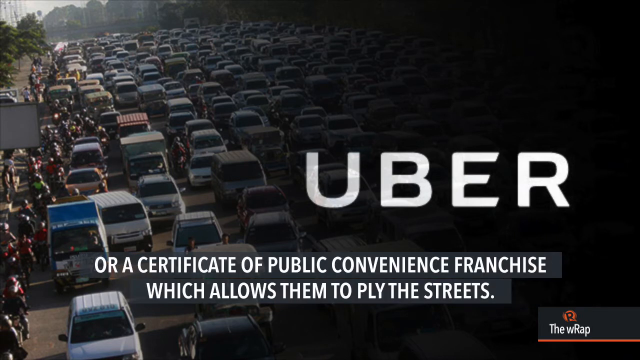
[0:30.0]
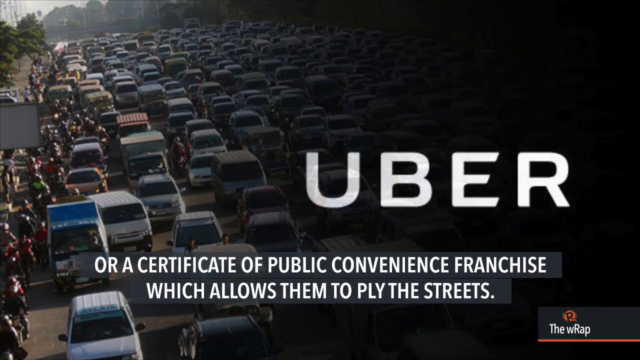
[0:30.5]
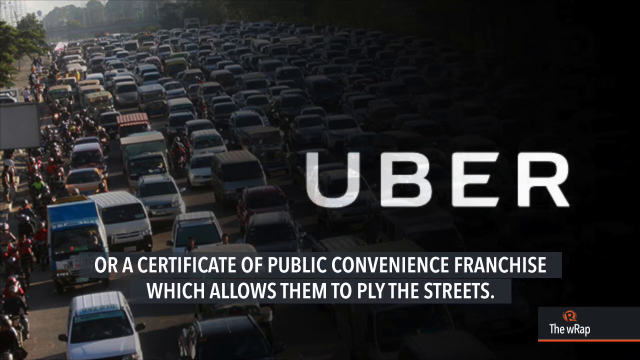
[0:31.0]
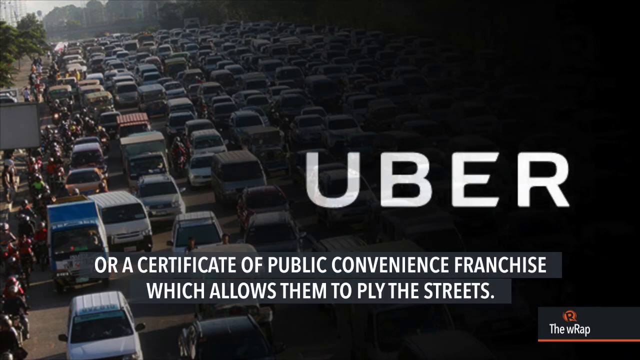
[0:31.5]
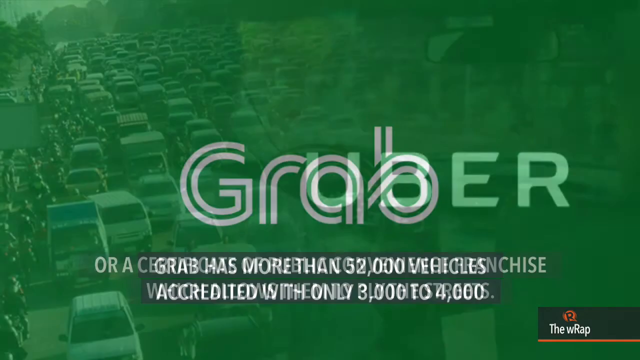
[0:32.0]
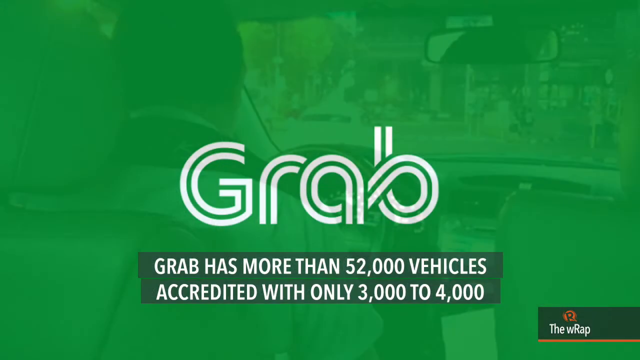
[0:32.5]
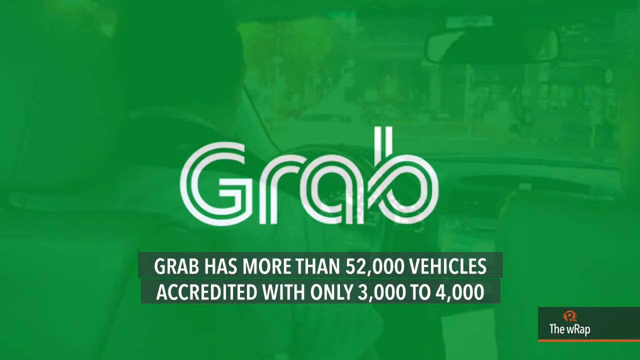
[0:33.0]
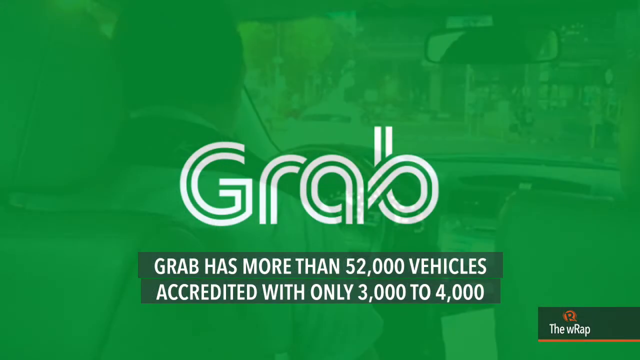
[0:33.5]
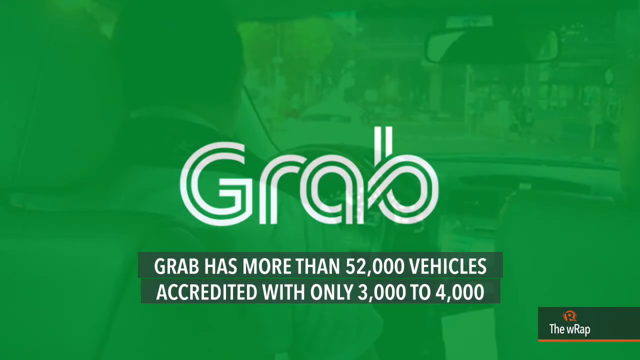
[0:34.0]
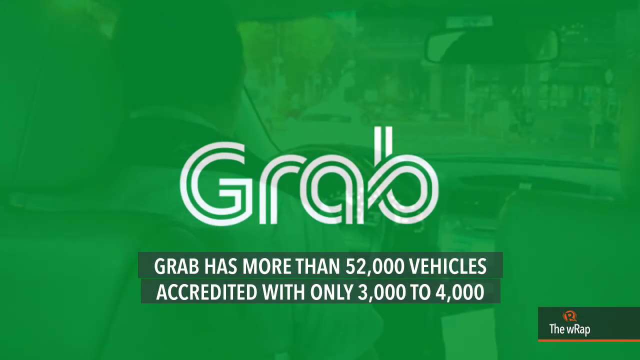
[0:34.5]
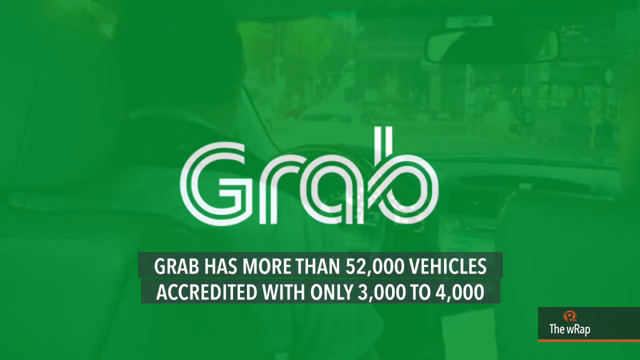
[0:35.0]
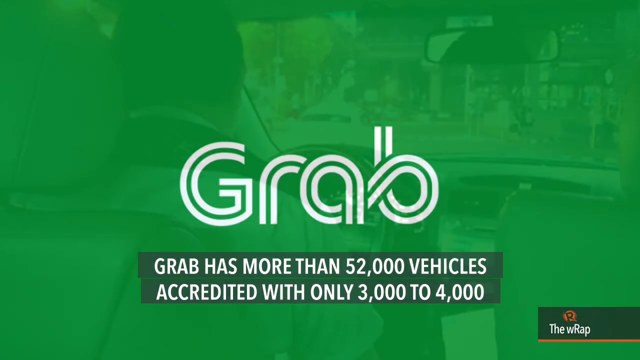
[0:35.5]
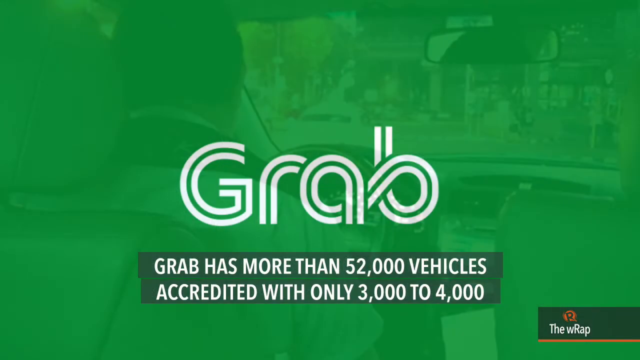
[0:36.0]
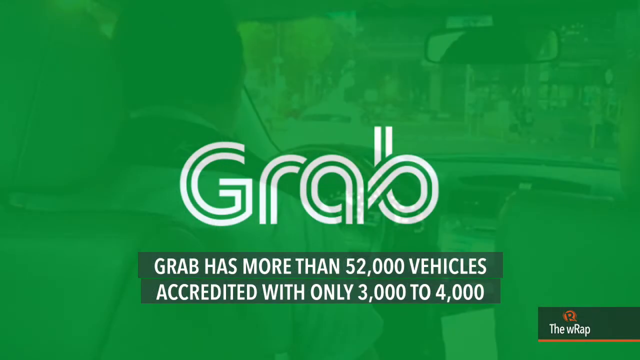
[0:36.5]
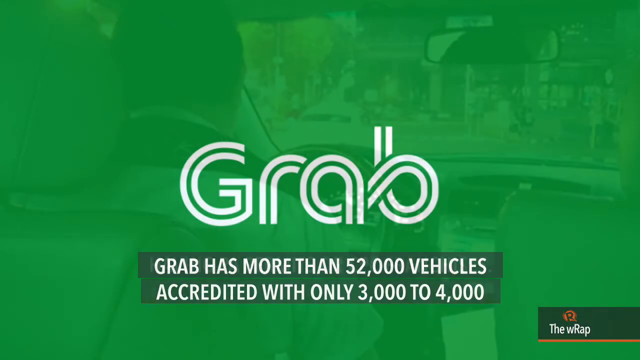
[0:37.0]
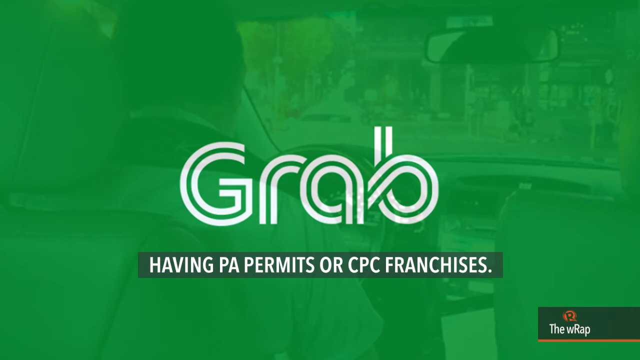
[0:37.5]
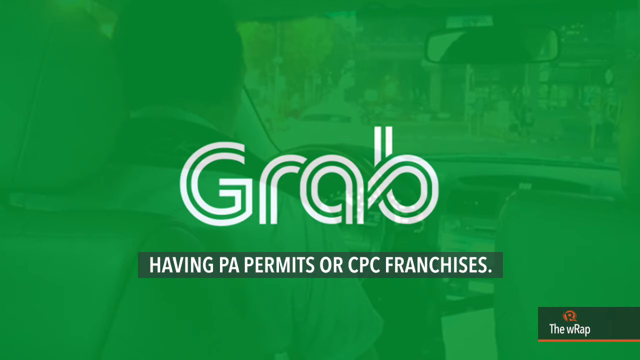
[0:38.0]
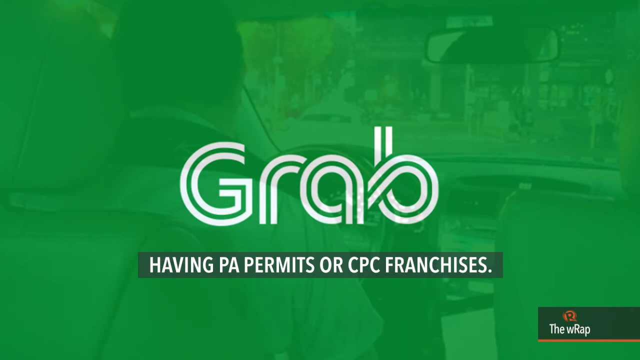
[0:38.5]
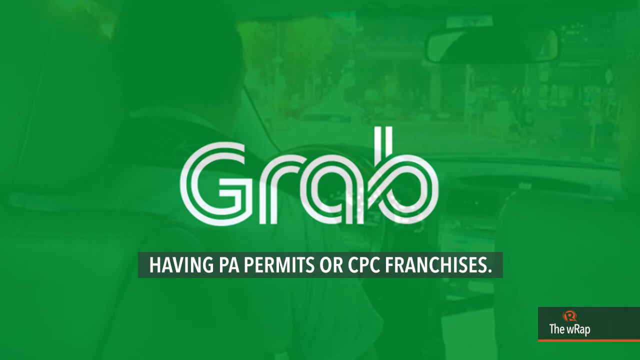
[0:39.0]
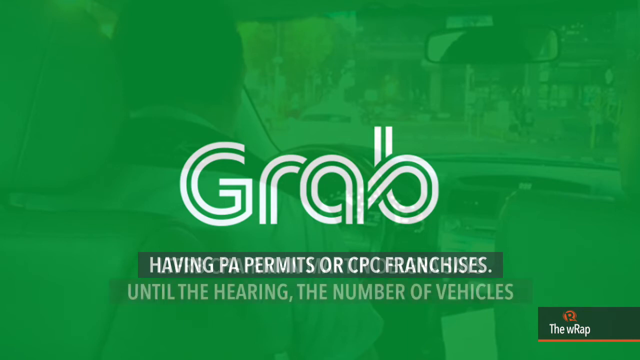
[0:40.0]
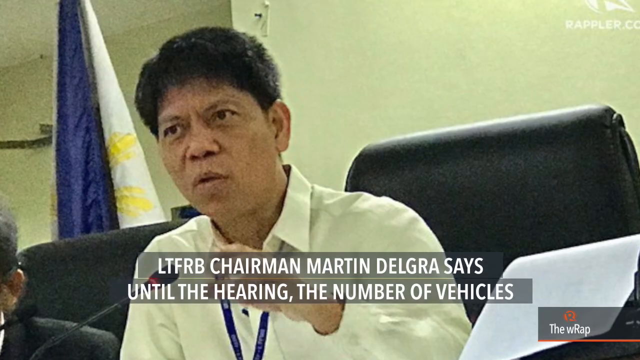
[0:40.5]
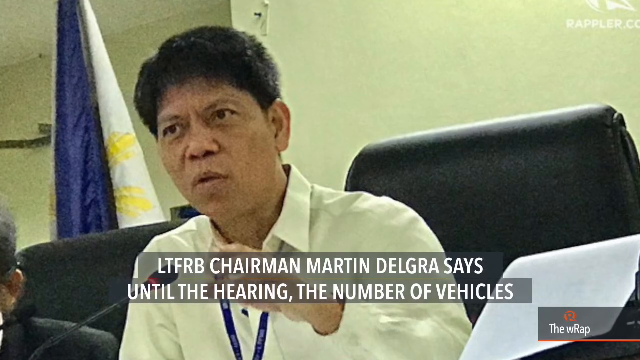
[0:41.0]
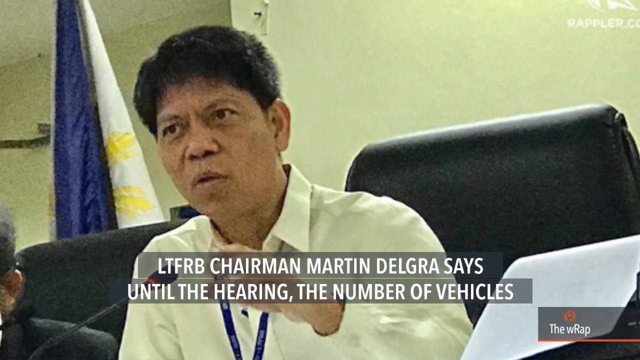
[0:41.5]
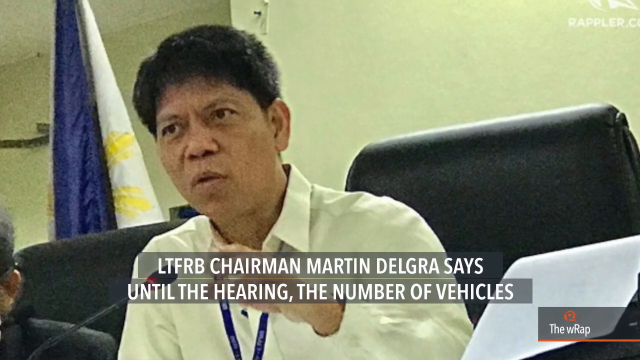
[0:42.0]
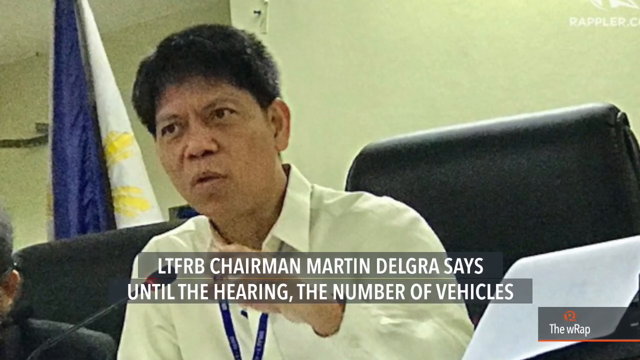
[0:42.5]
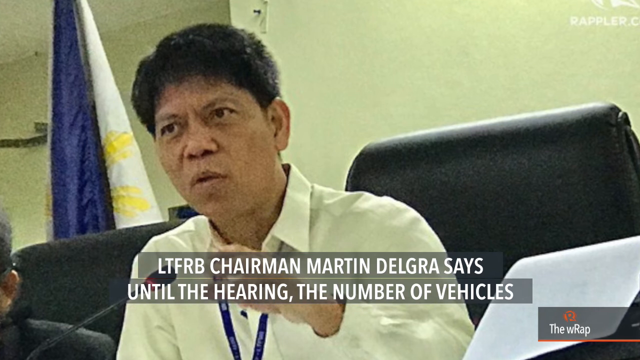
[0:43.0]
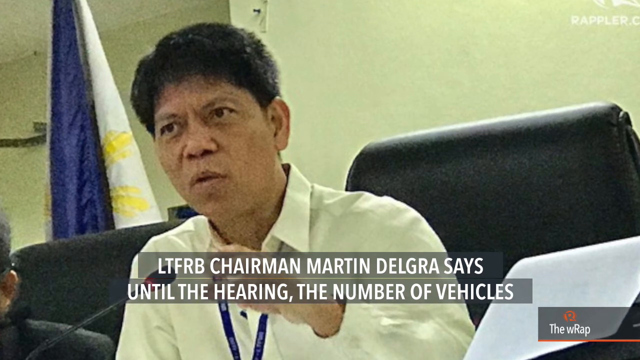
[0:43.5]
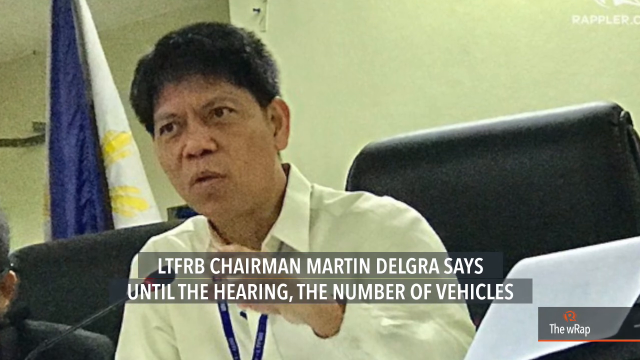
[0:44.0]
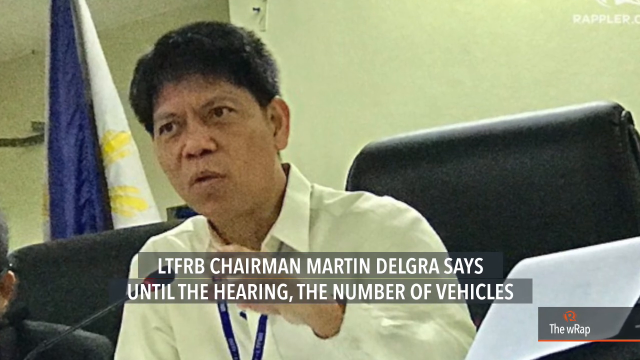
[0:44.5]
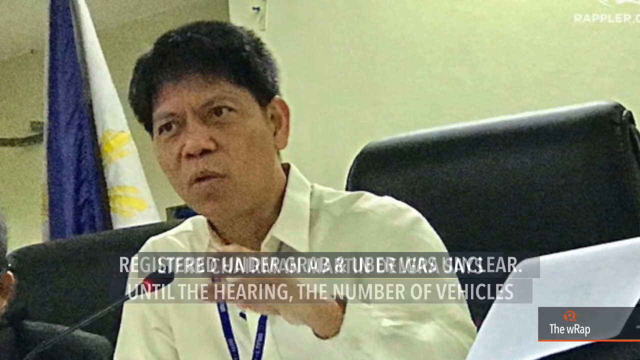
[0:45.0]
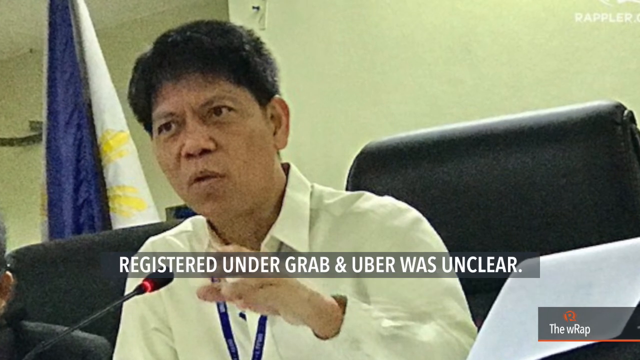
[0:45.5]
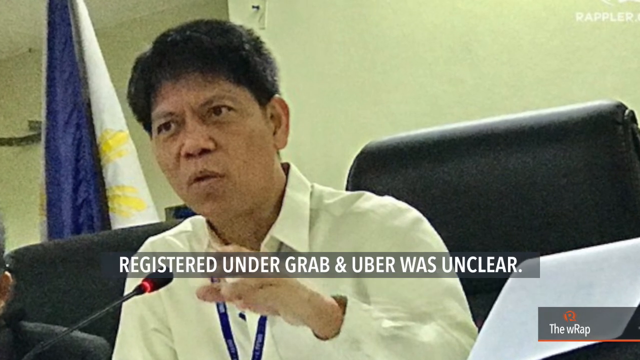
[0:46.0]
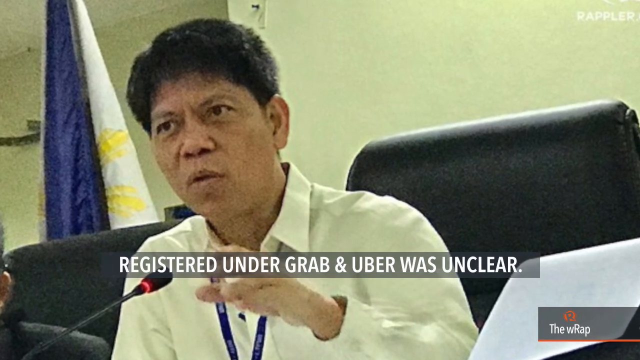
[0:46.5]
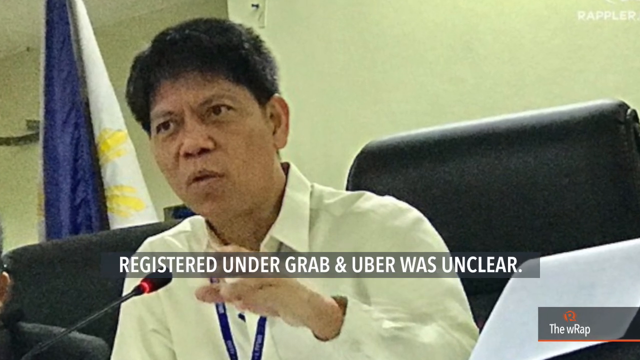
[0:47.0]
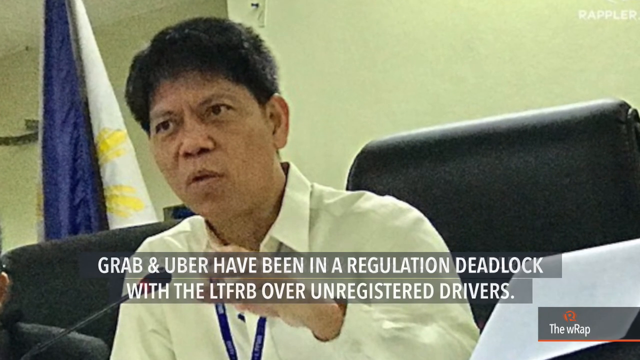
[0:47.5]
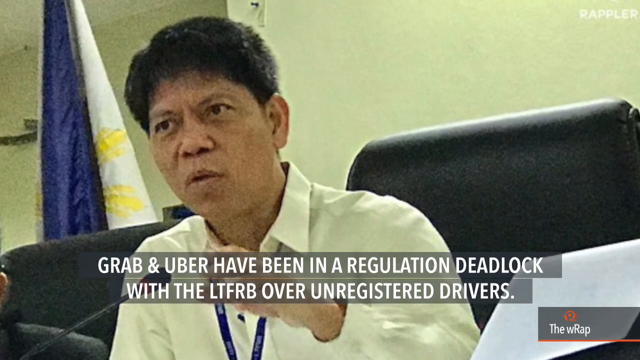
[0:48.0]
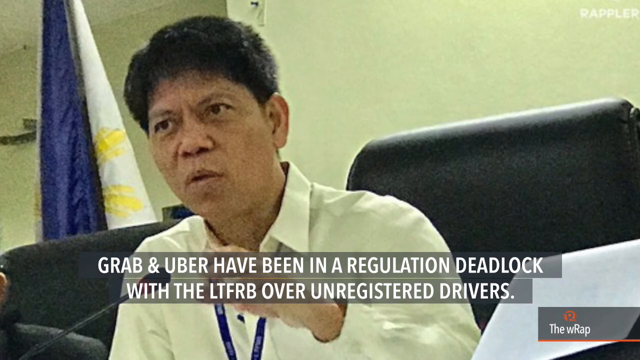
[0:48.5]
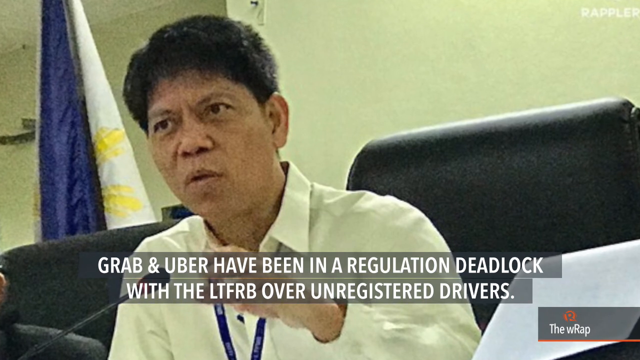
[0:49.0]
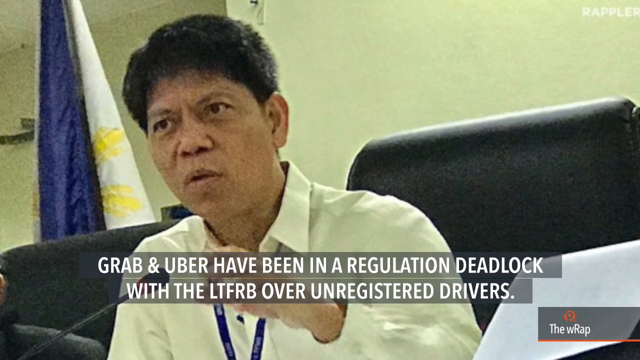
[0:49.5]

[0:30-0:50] The video continues on Grab and Uber, referring to a hearing with the chairman, Mr. Martin Delgra, and to the number of vehicles registered under the two companies.